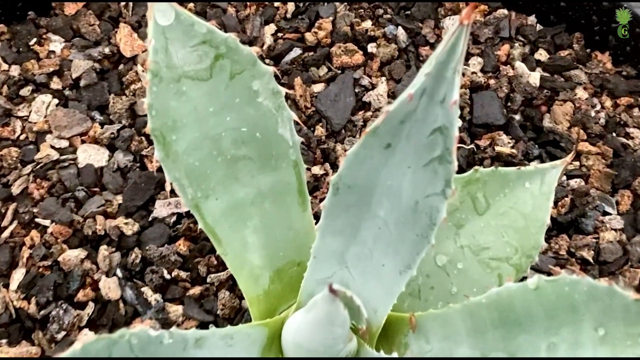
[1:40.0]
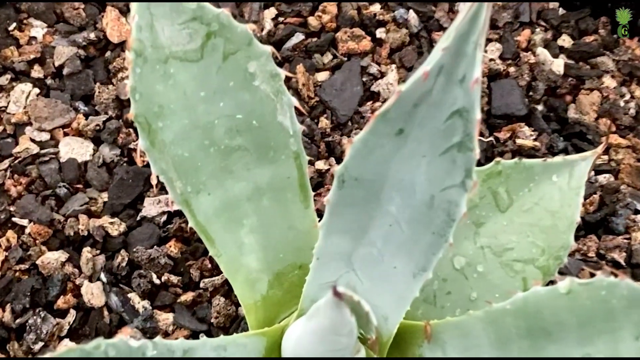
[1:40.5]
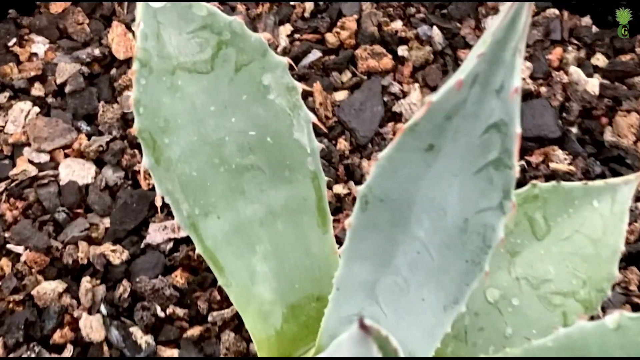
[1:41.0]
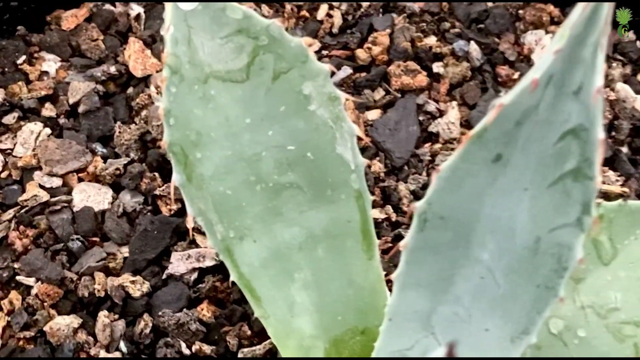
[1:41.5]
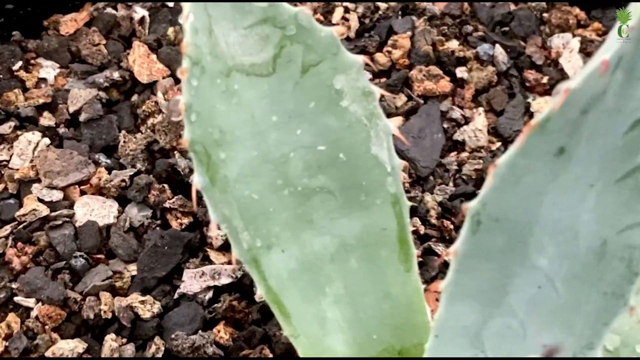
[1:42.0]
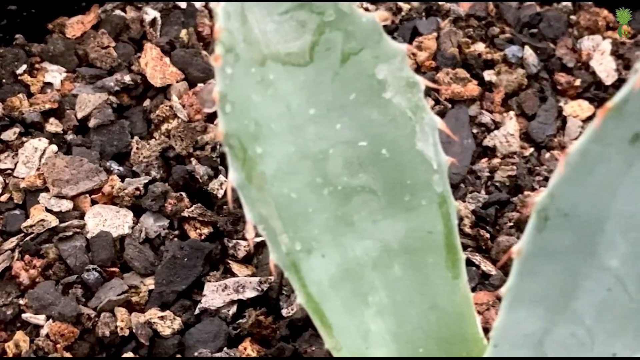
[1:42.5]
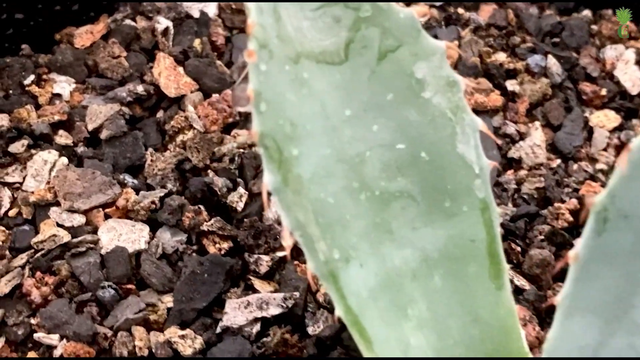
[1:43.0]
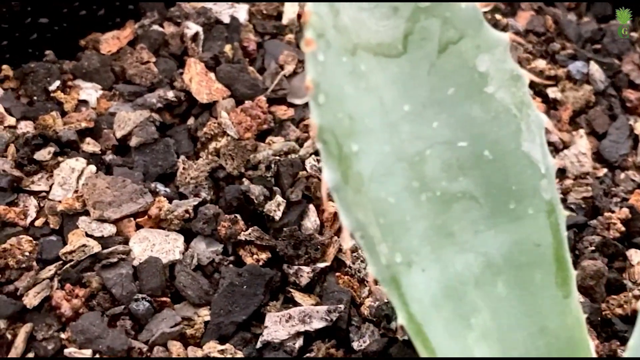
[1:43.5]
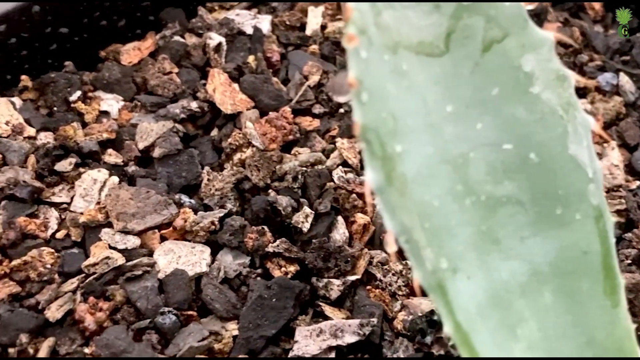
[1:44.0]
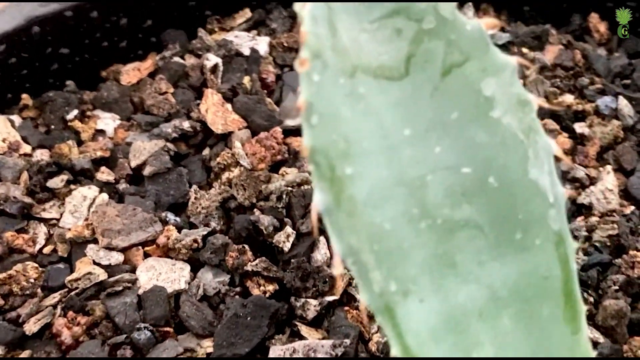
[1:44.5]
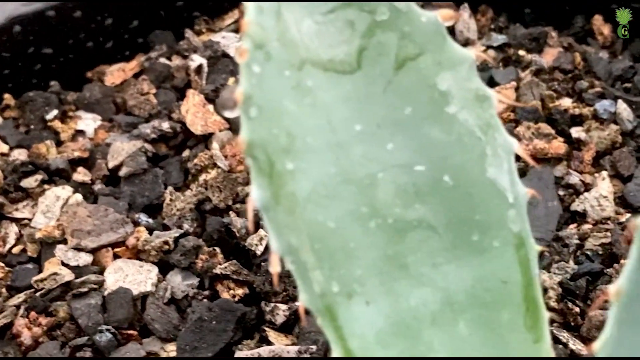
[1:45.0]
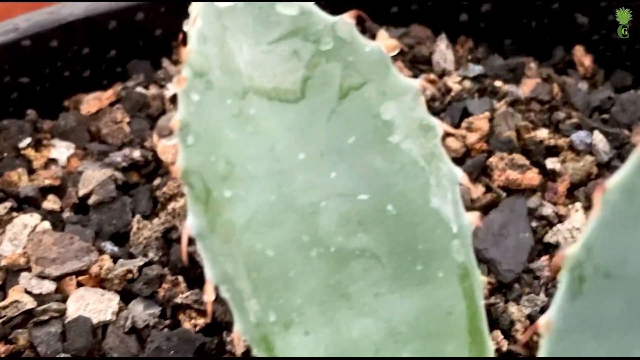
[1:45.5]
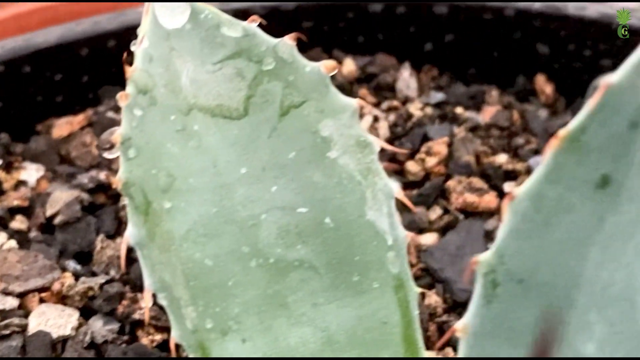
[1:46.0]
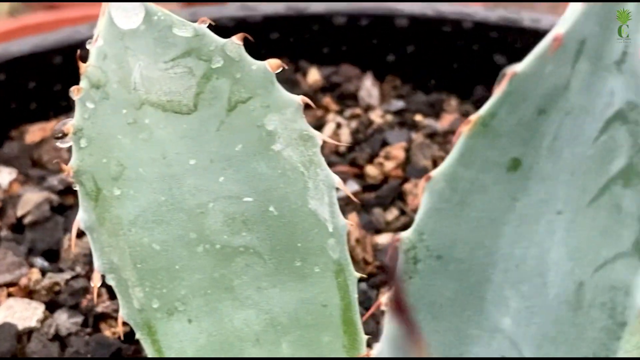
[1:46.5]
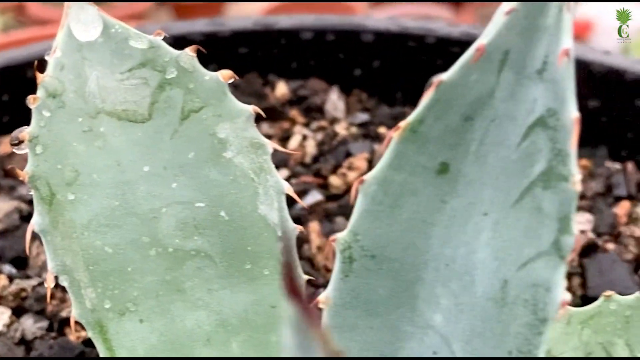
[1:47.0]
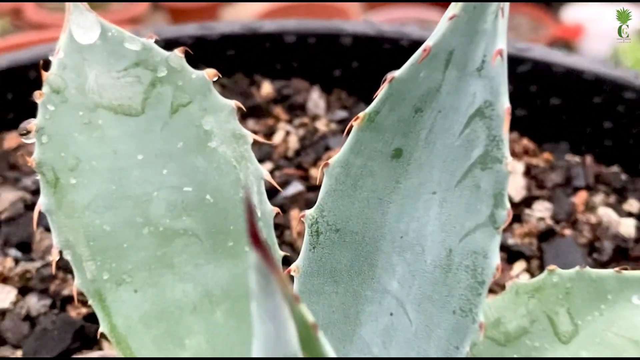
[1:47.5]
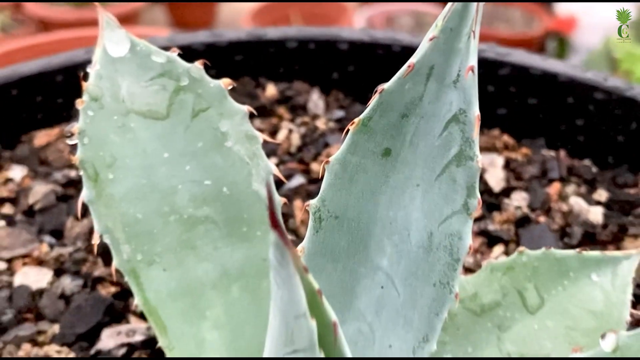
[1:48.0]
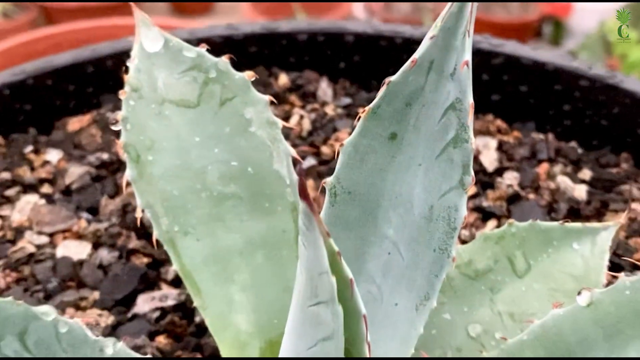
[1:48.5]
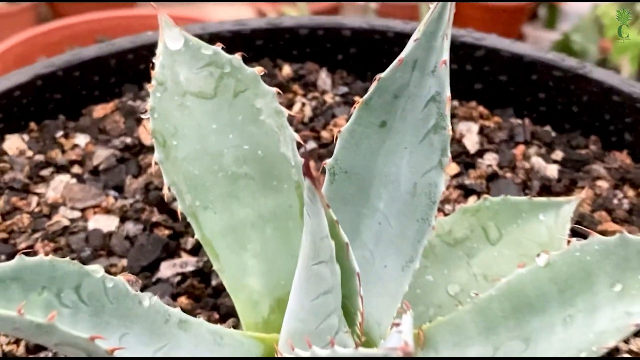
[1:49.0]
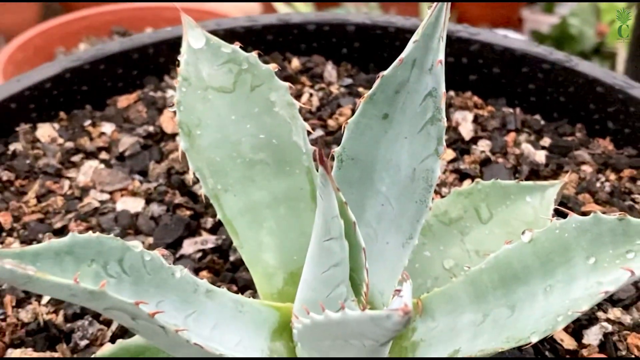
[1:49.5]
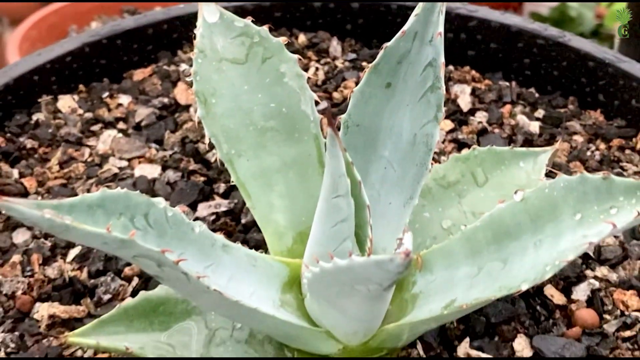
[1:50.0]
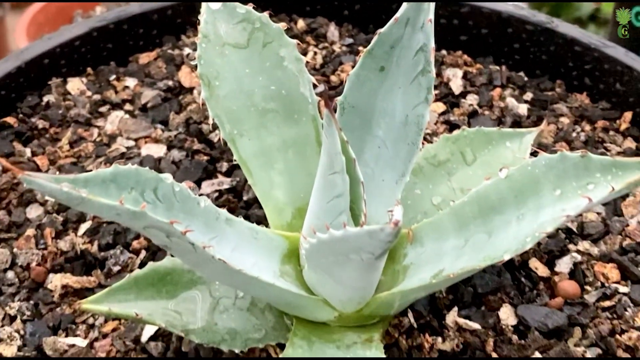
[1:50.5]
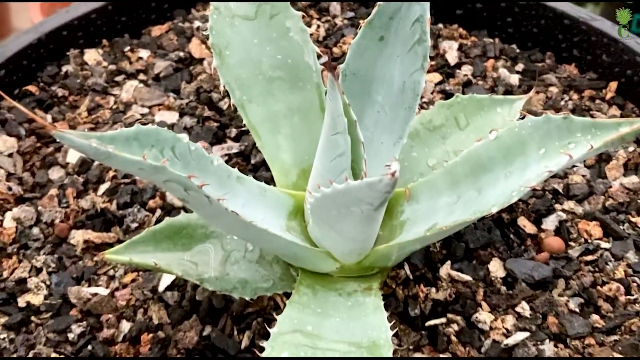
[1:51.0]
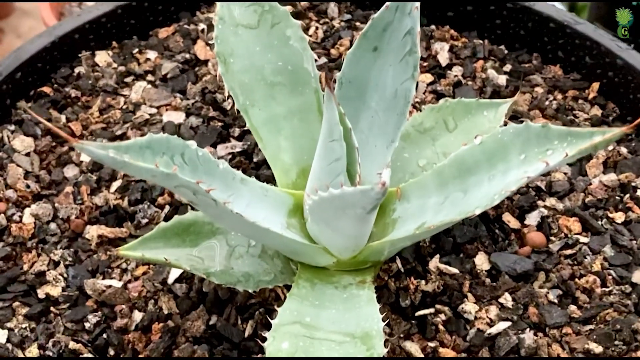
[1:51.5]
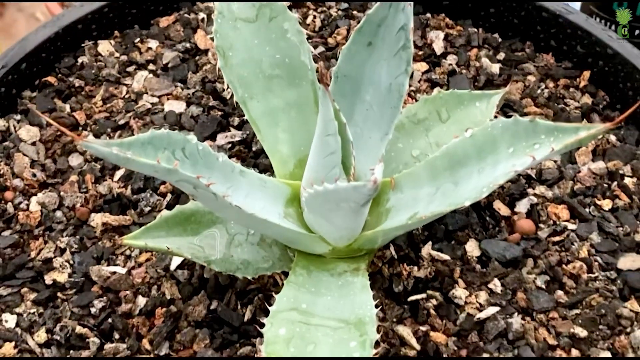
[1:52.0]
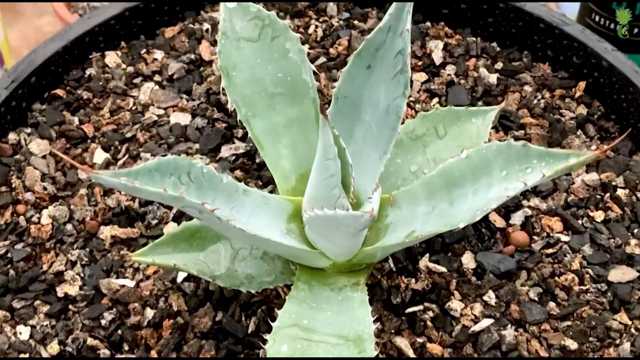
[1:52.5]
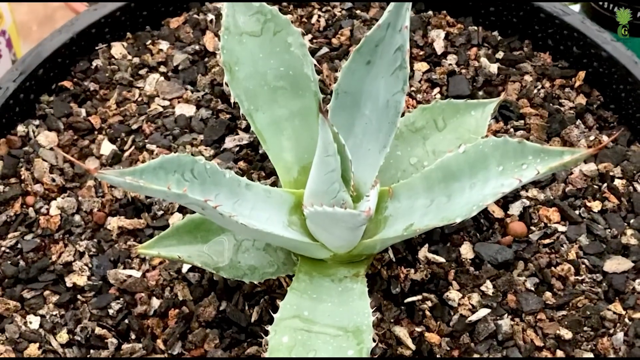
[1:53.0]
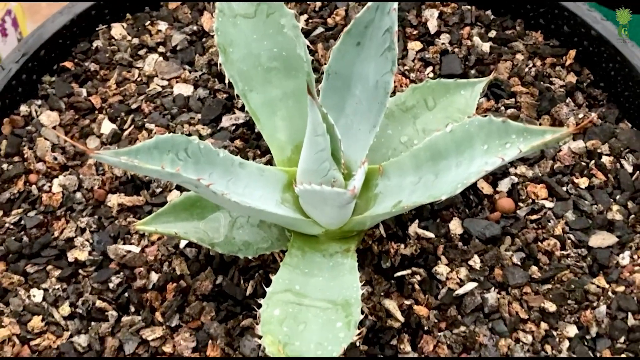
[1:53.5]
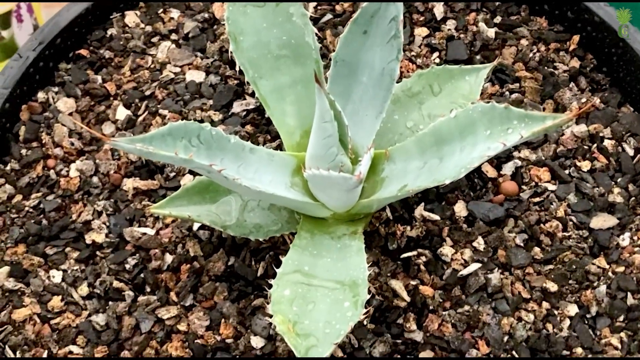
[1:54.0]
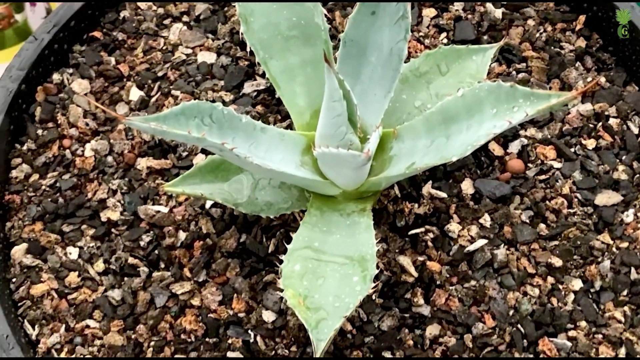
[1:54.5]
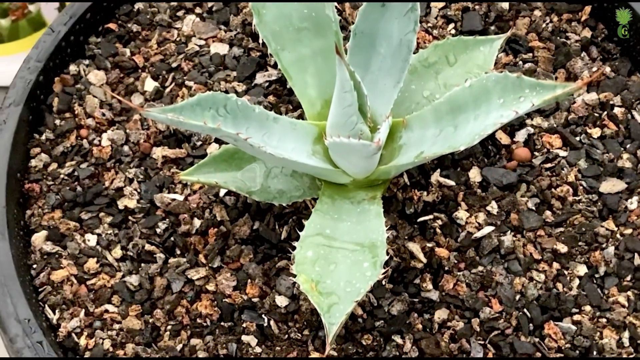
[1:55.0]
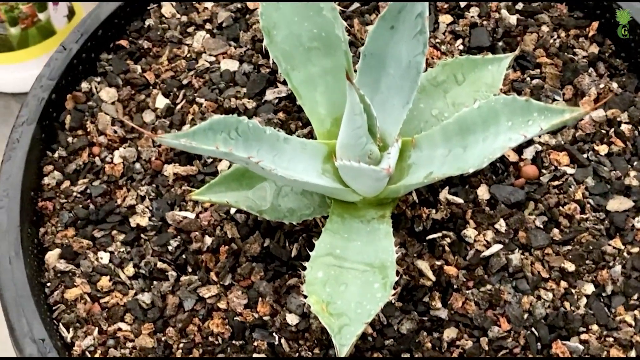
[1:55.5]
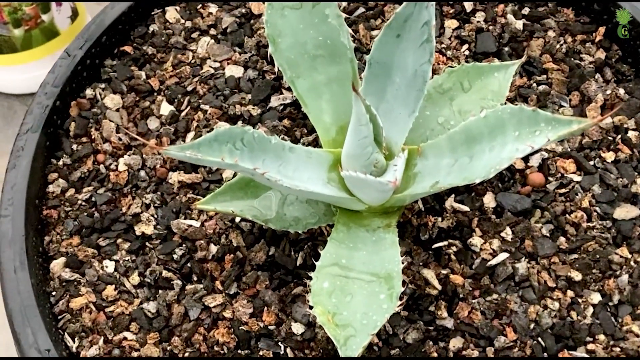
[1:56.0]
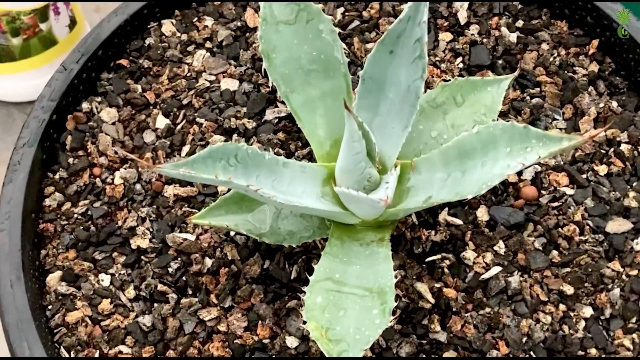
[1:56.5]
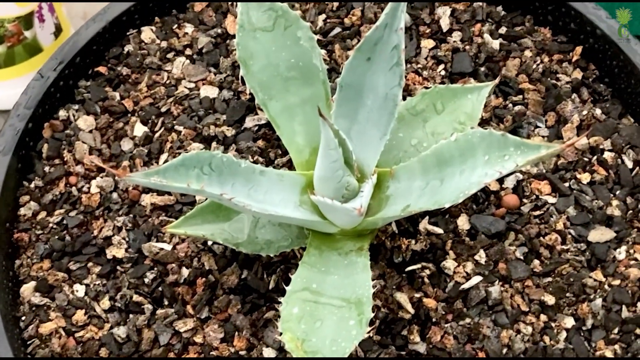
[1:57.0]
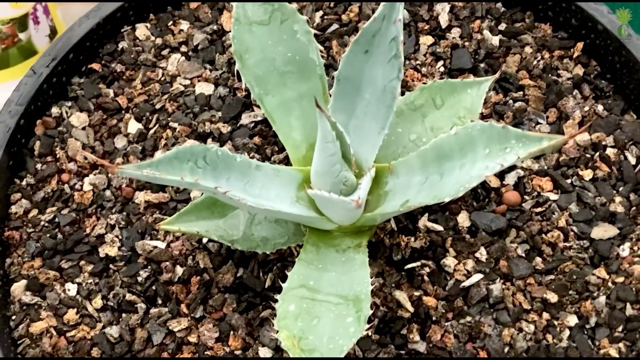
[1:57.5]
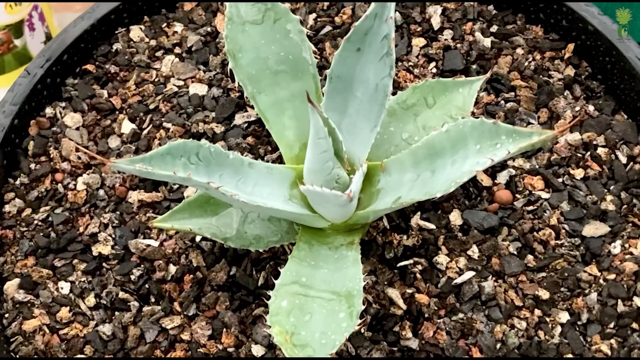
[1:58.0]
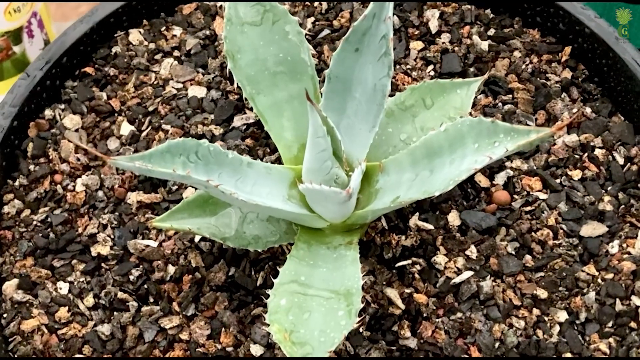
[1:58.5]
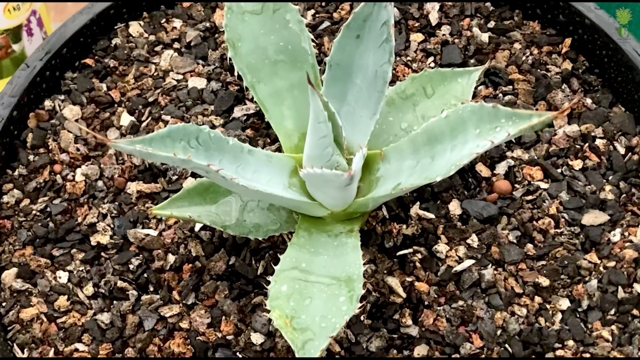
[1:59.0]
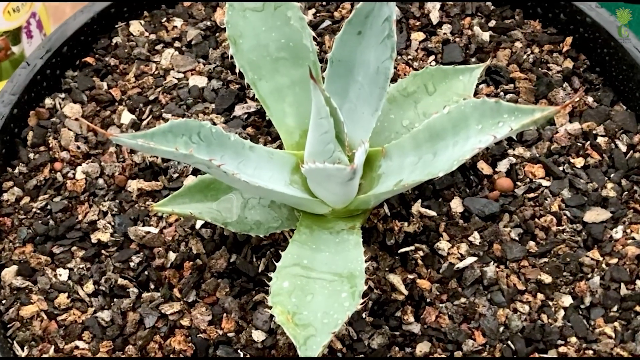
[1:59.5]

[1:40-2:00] The camera zooms in on the succulent from an aerial point of view, then turns to the left, zooming in on the material that seems to be covering the soil in the pot. It looks like it is made up of bits of gravel or stone, dried plant matter, and wood chips, perhaps pieces of bark. Some of the stones look like they might be porous, like pumice.